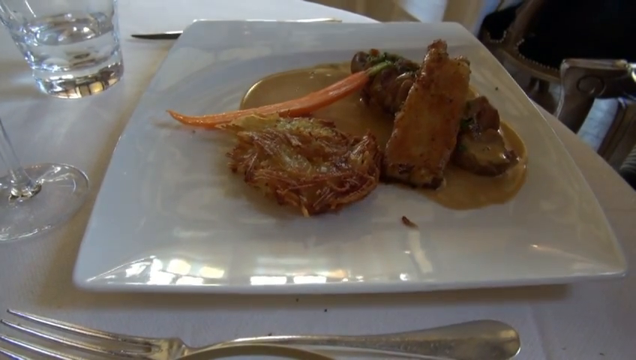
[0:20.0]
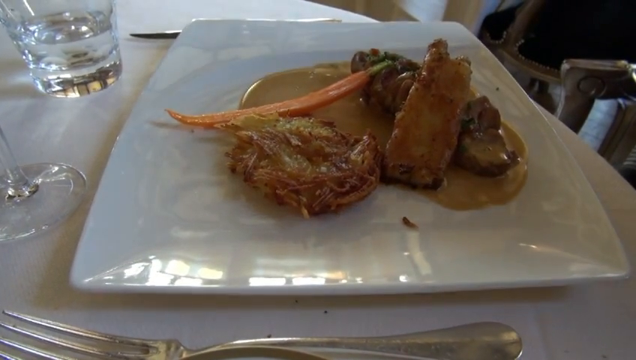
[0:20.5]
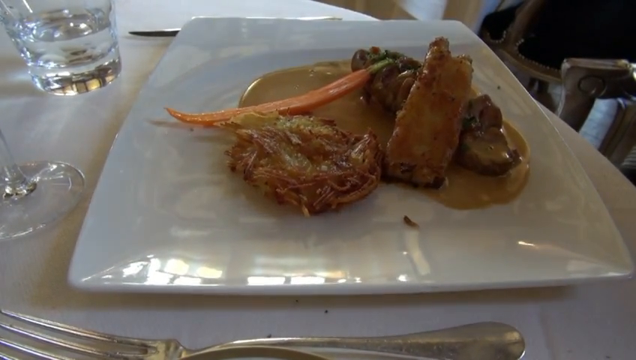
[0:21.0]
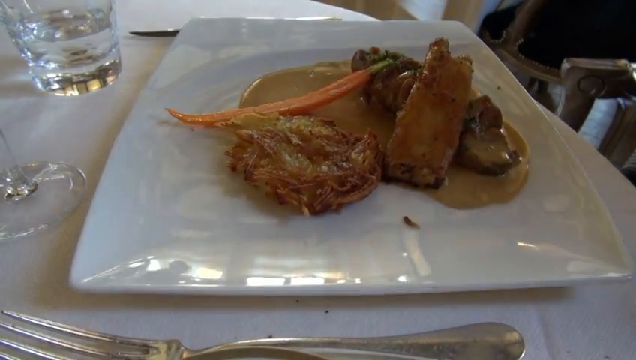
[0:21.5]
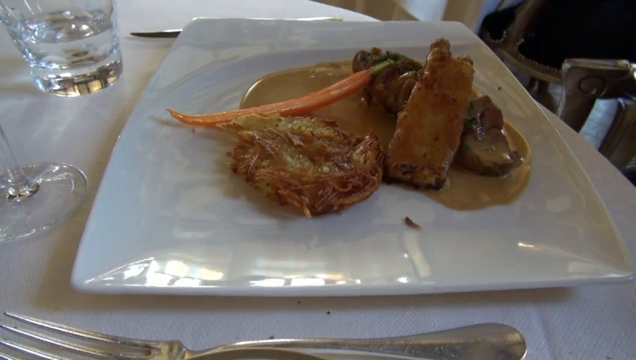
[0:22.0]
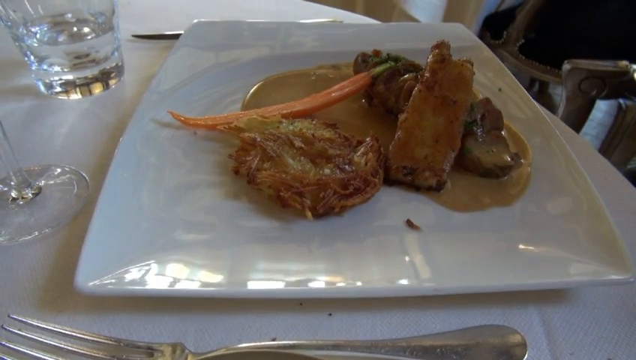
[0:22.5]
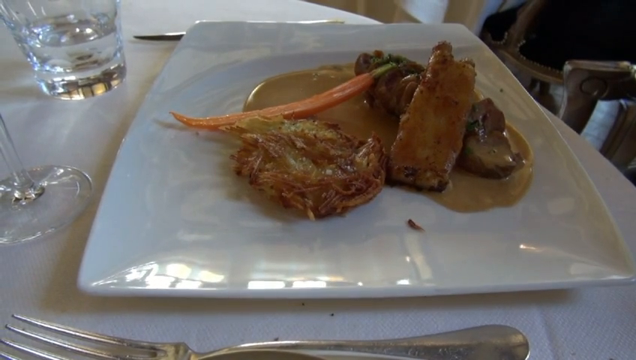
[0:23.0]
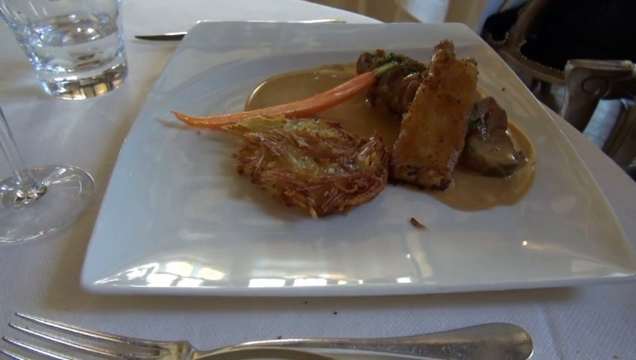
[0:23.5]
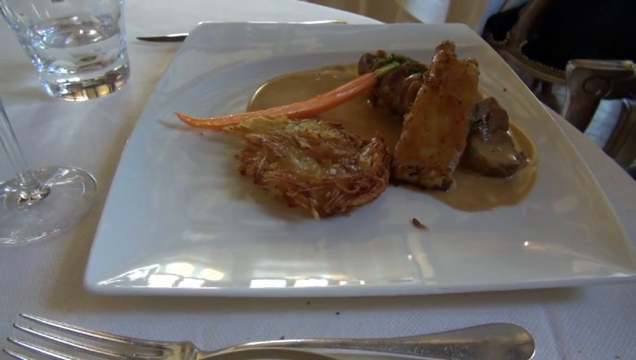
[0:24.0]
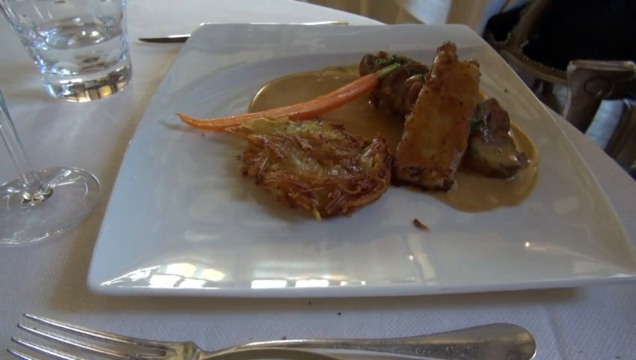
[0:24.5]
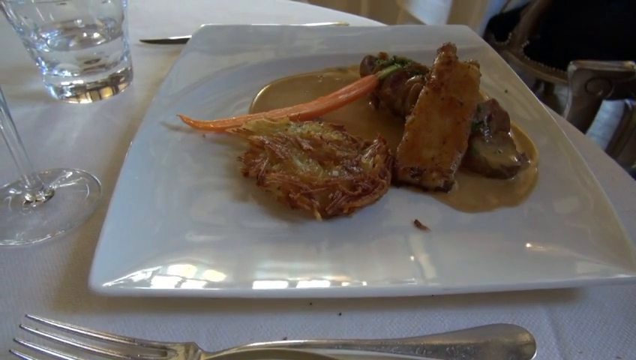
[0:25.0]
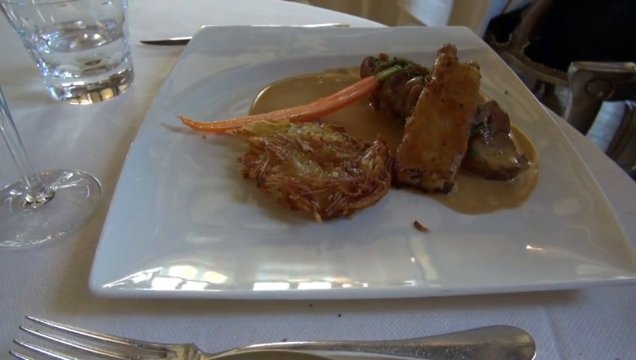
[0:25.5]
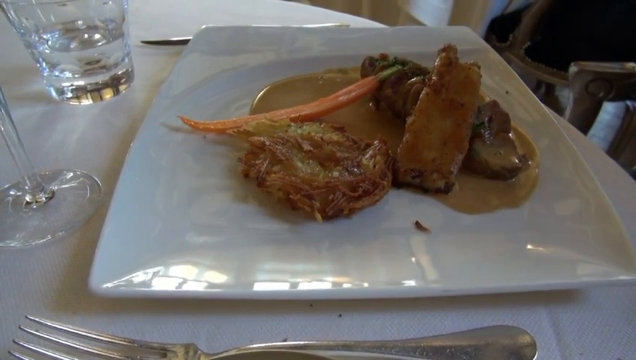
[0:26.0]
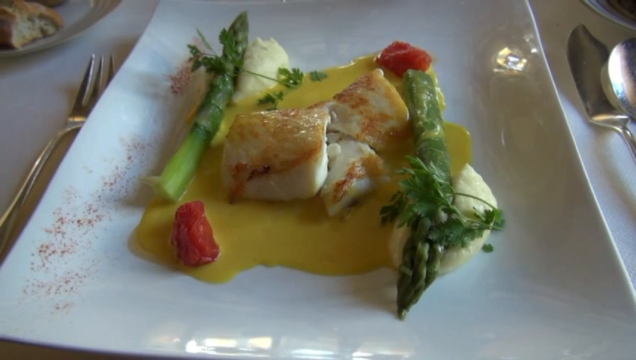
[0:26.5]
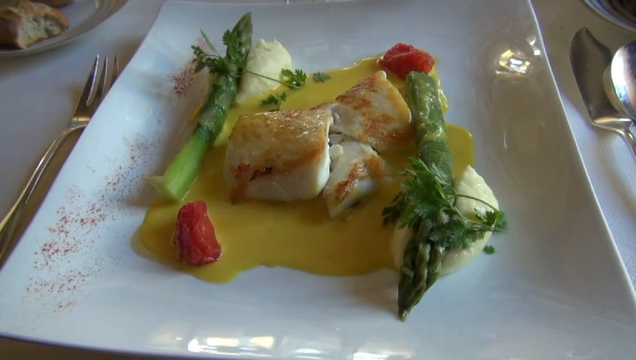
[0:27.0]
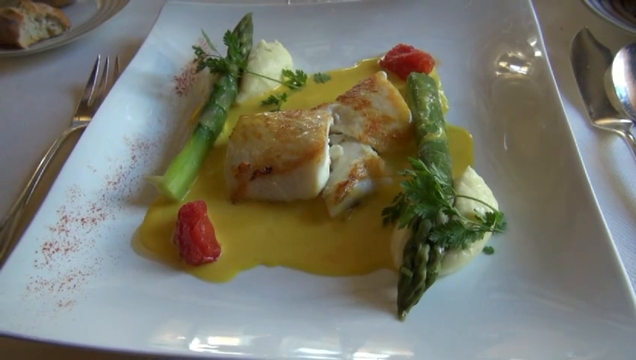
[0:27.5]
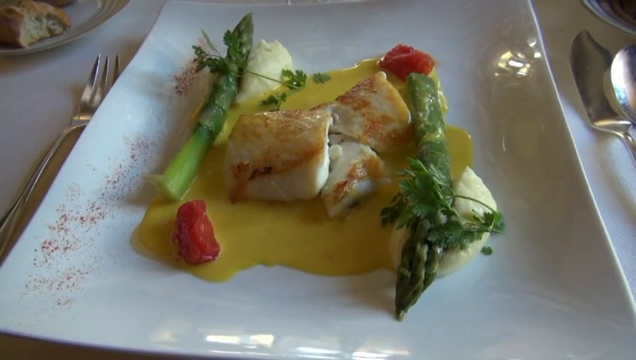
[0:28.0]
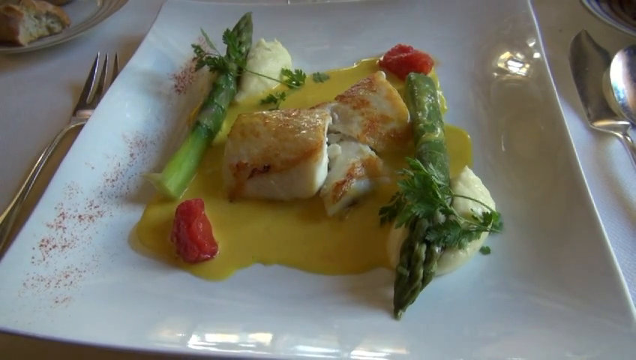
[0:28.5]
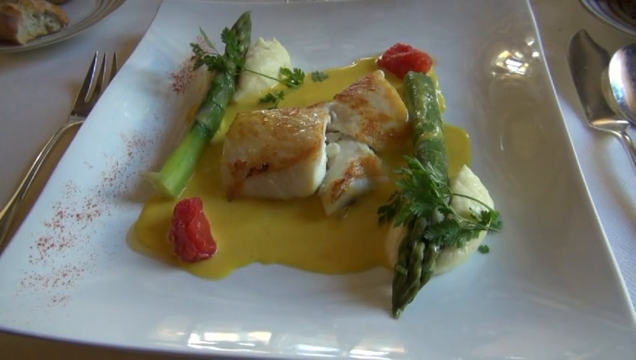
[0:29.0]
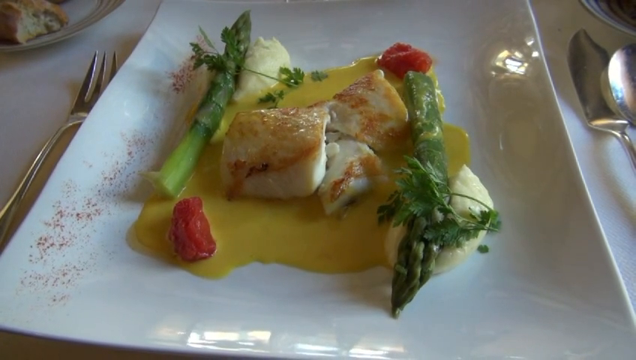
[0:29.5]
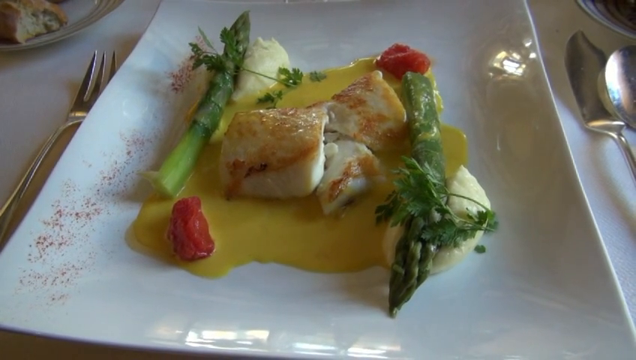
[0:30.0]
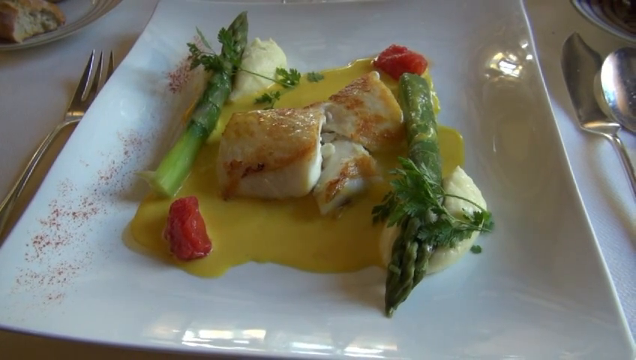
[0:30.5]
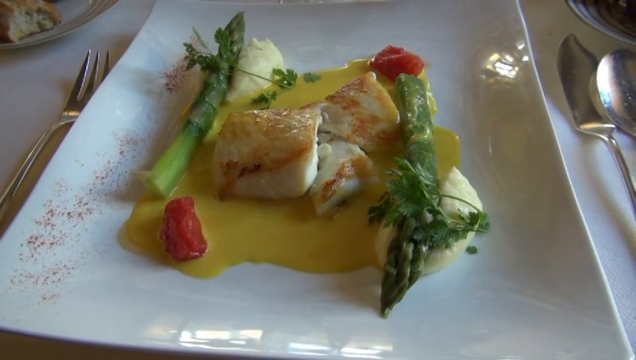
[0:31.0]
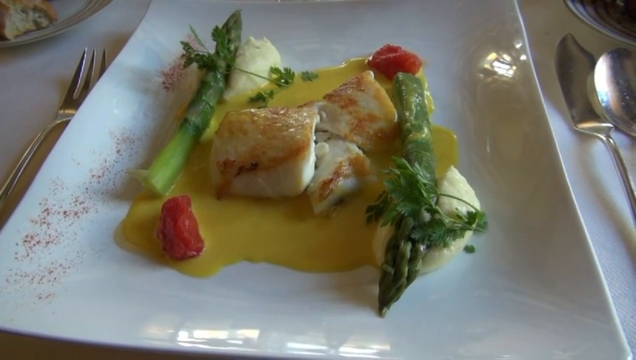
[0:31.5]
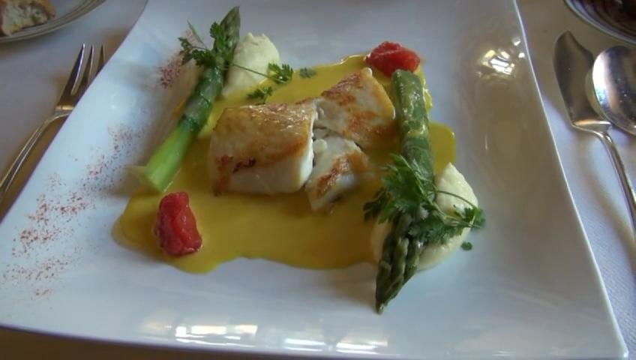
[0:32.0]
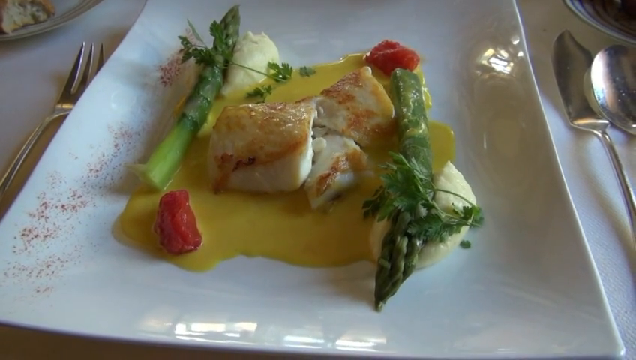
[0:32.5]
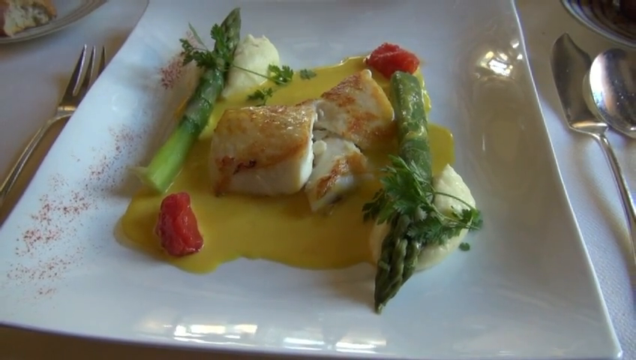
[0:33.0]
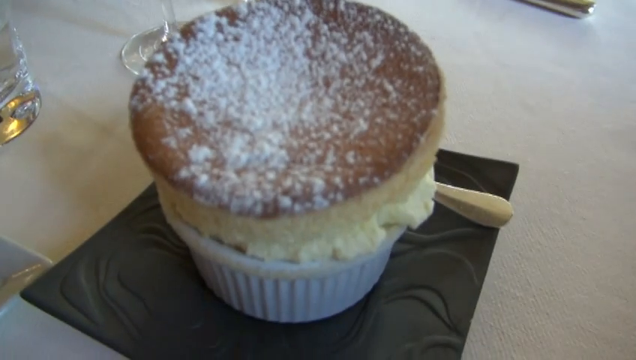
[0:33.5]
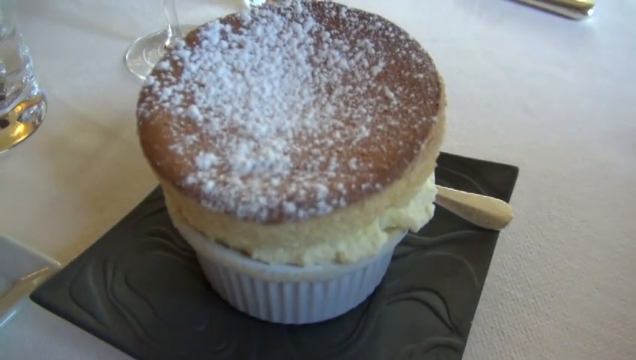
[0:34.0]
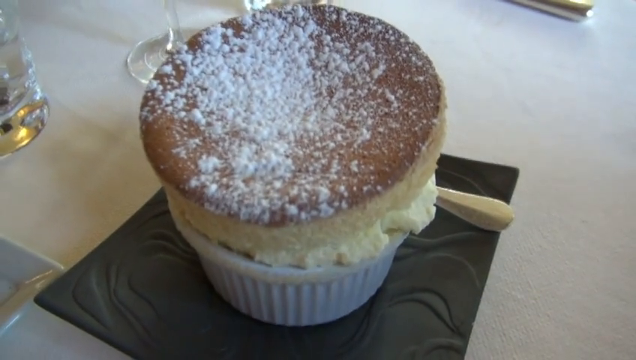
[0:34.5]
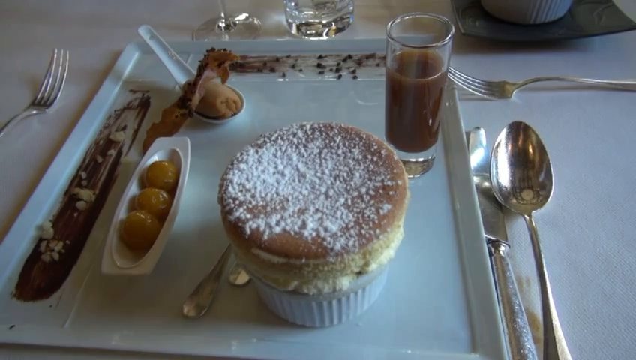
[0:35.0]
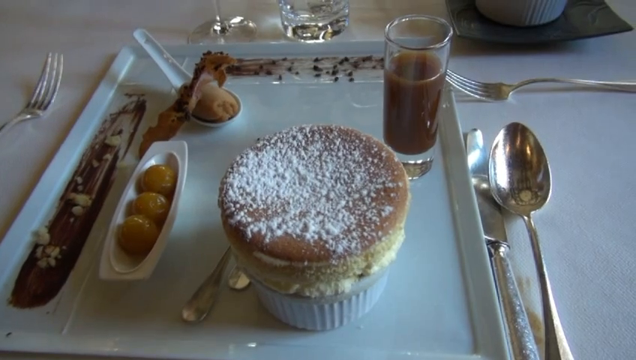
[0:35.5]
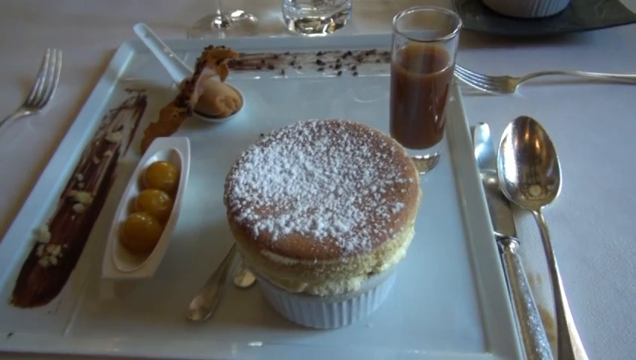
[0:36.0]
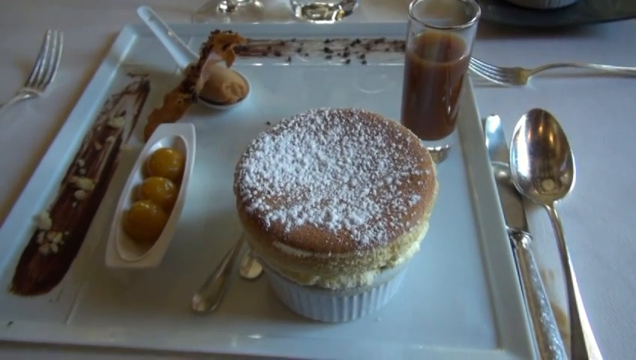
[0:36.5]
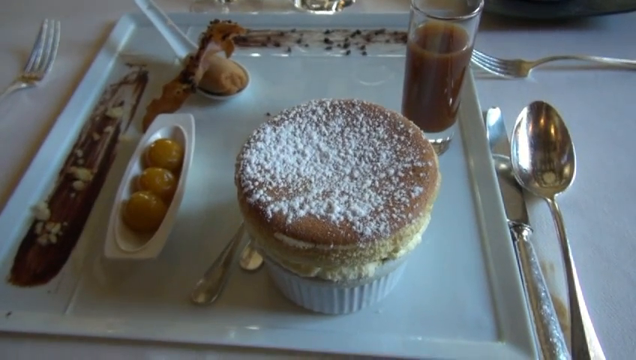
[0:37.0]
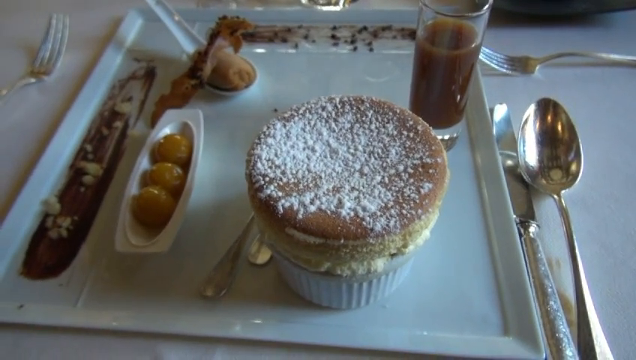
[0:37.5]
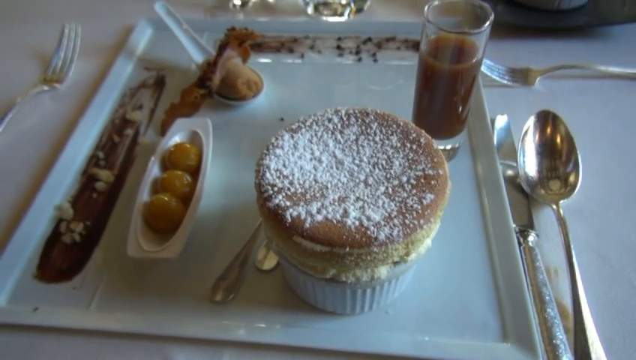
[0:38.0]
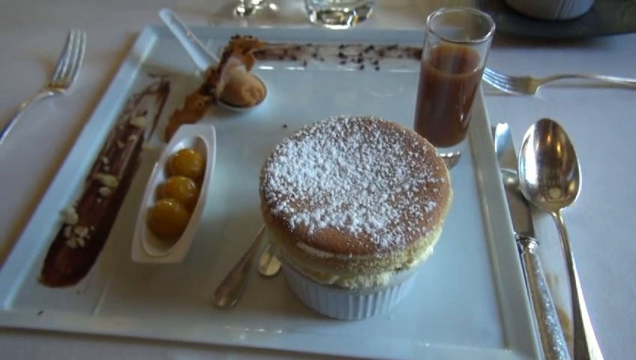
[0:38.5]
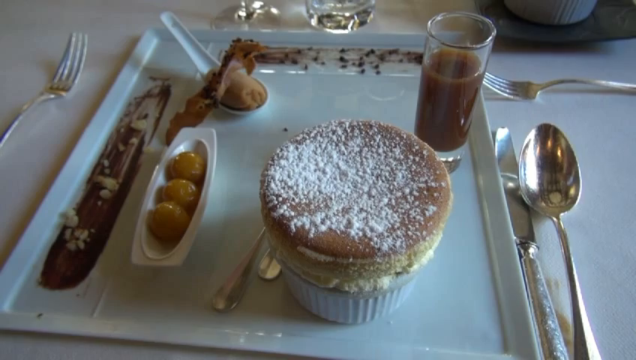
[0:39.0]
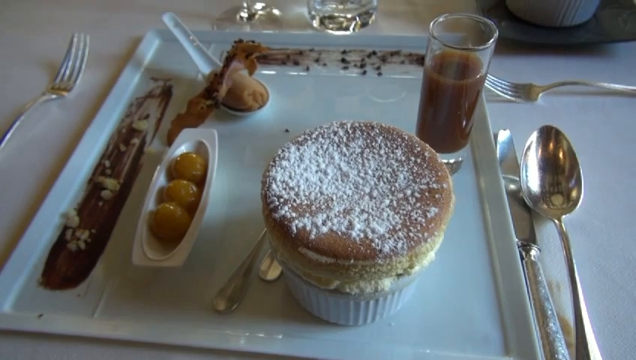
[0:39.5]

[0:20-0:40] Different foods are on display, including salmon and what may be asparagus. The table is white. There are different forks; the fork on the left has one of its tines bent. There is a rectangular plate, with a knife and spoon on the other side, and another fork that goes with a different plate. That plate is white and smeared at the top. There is a big white spoon, like a soup spoon, with something brown on it, possibly a dessert, and something going across it as well. Another smear on the side has crumbs on it. There appear to be three olives and some type of baked dessert, and a brown drink, possibly a cleanser.